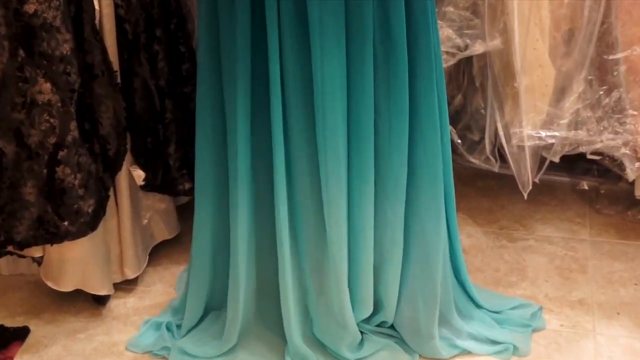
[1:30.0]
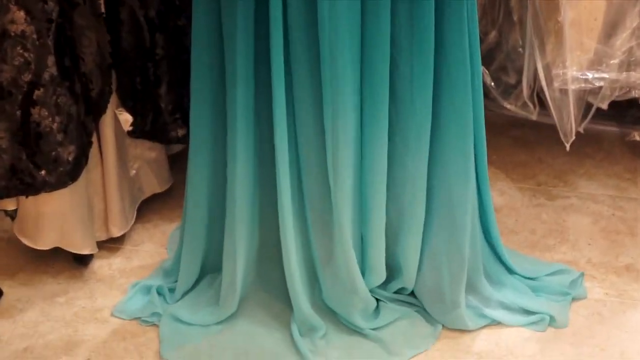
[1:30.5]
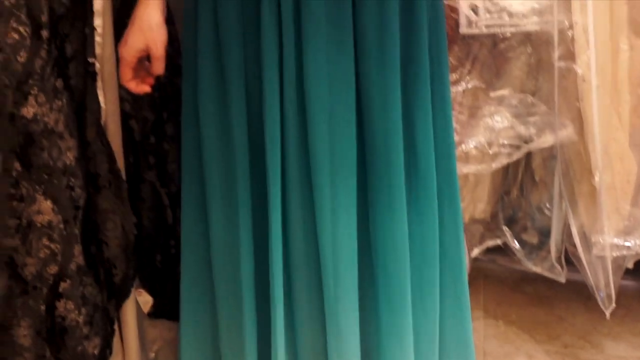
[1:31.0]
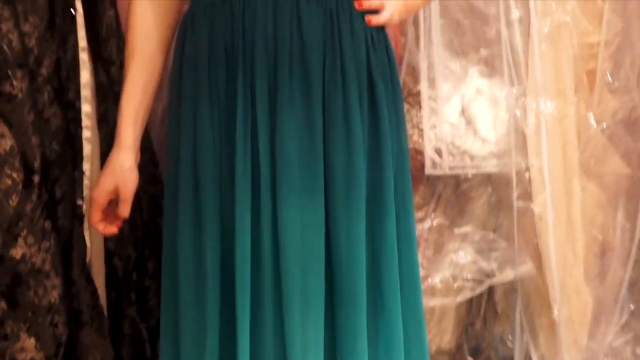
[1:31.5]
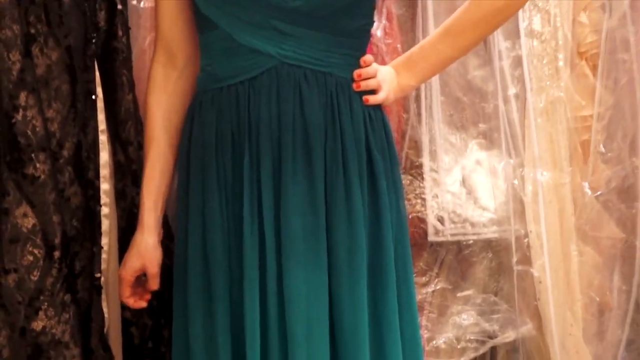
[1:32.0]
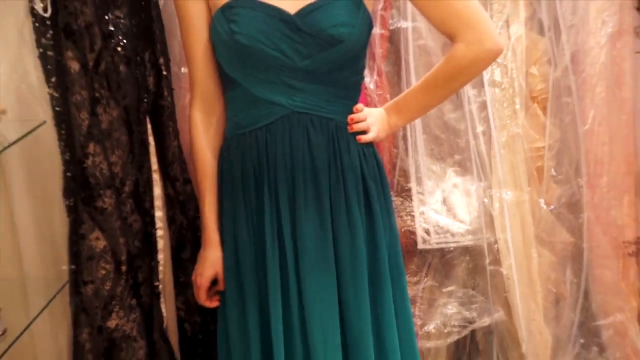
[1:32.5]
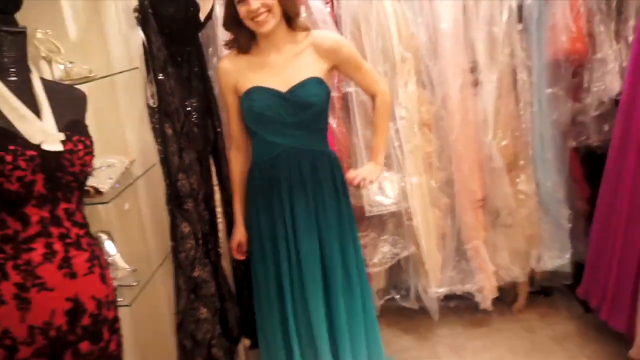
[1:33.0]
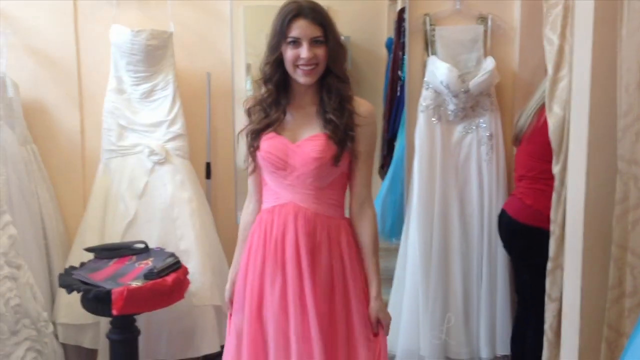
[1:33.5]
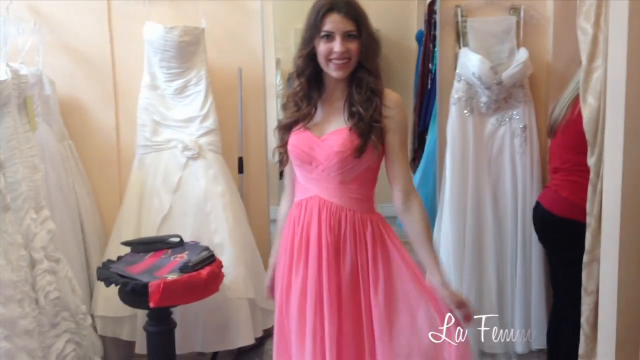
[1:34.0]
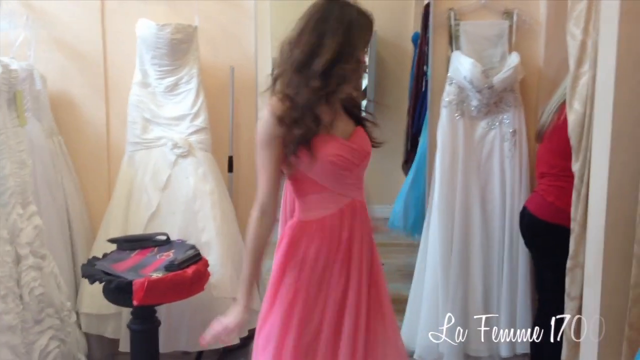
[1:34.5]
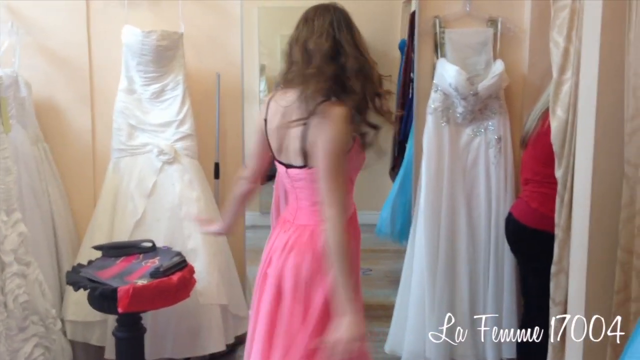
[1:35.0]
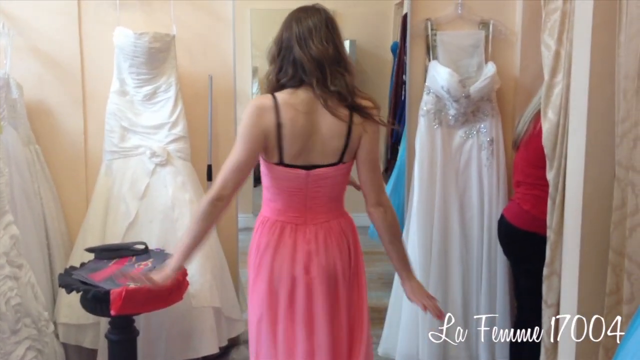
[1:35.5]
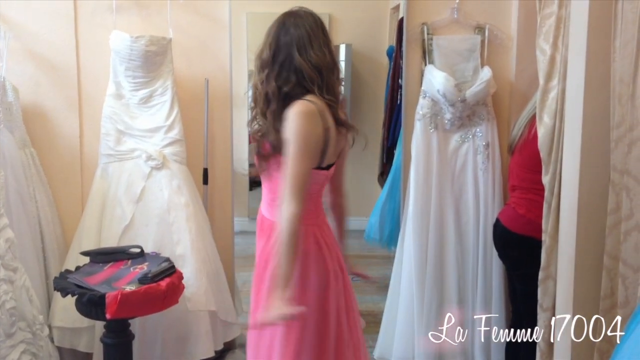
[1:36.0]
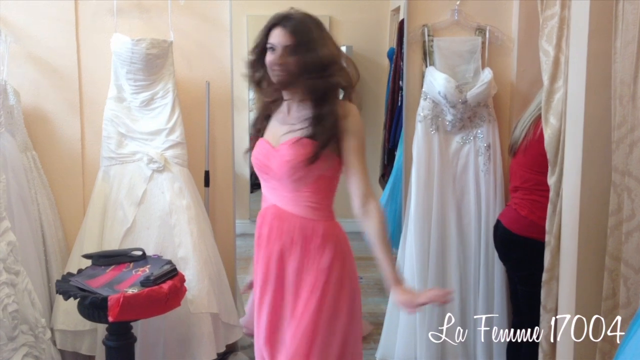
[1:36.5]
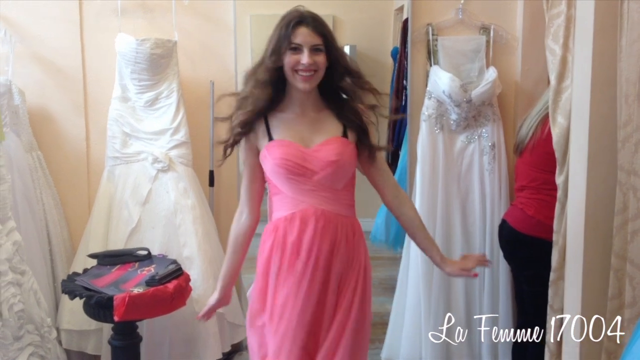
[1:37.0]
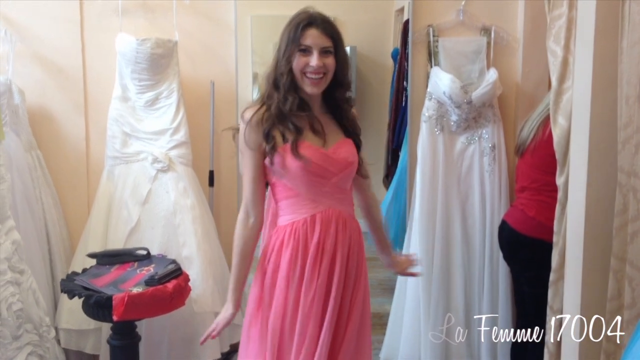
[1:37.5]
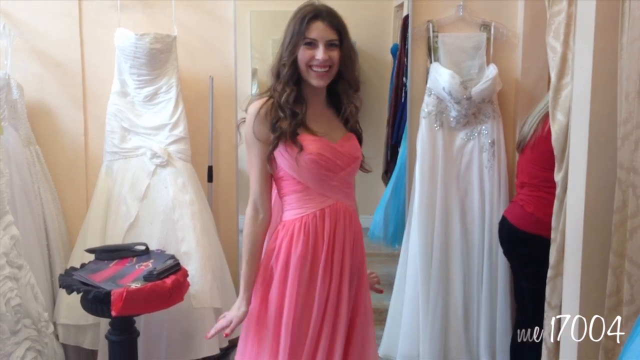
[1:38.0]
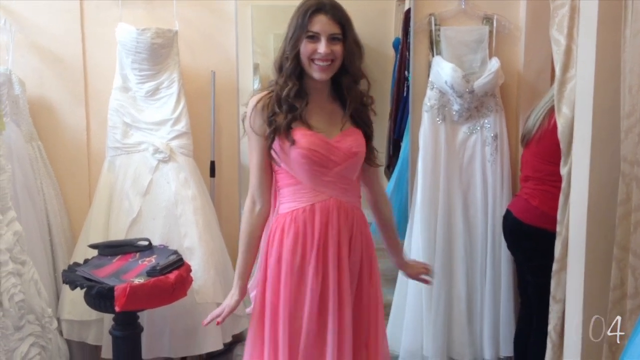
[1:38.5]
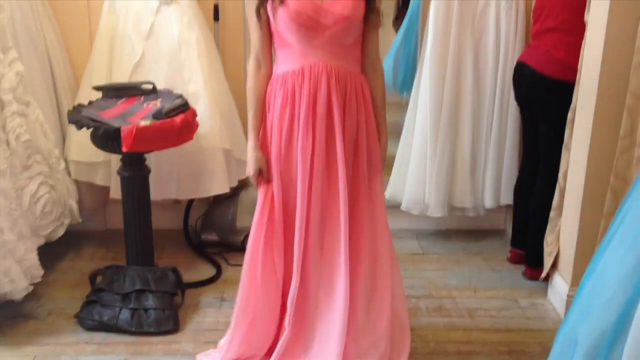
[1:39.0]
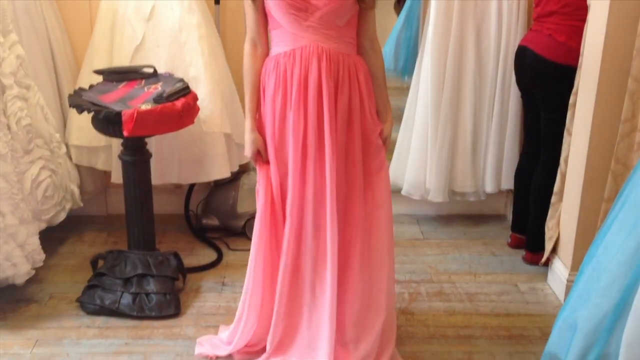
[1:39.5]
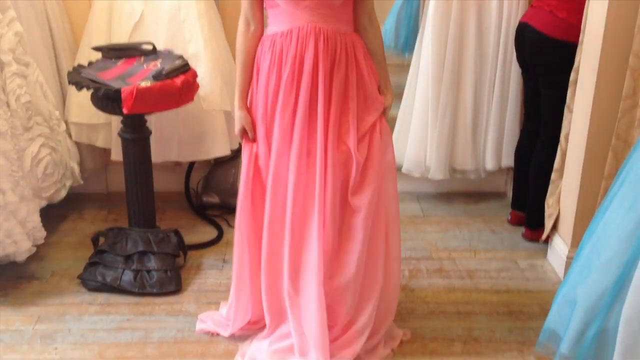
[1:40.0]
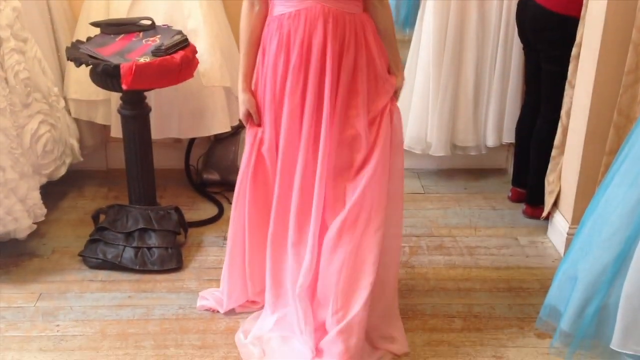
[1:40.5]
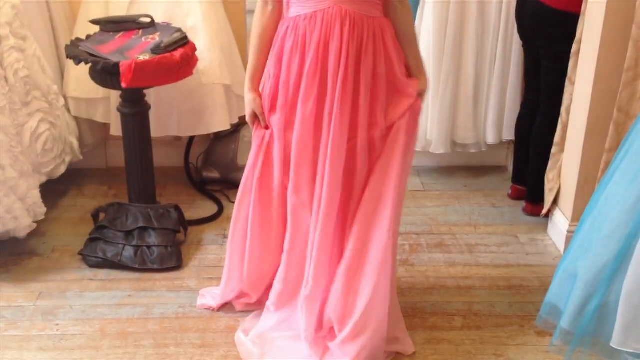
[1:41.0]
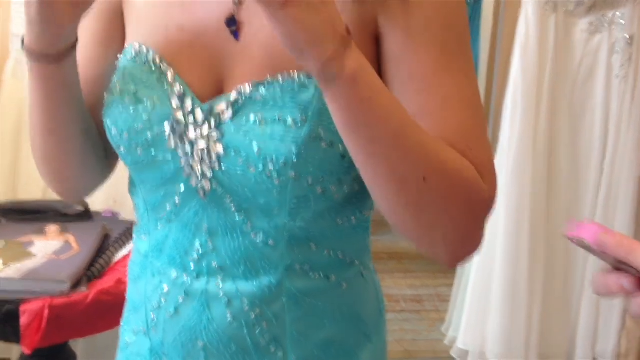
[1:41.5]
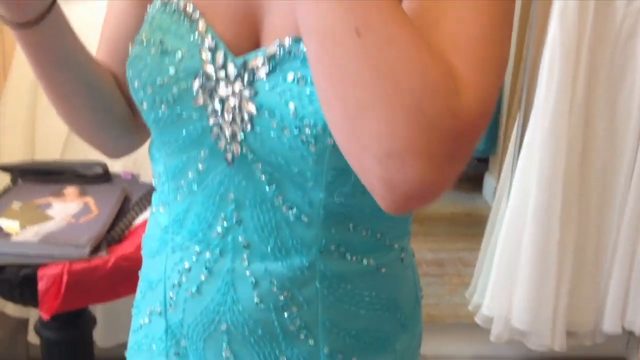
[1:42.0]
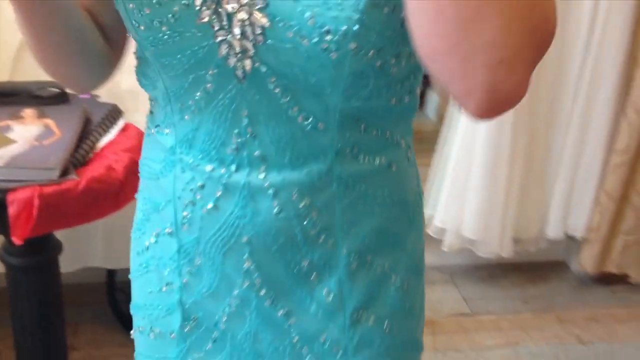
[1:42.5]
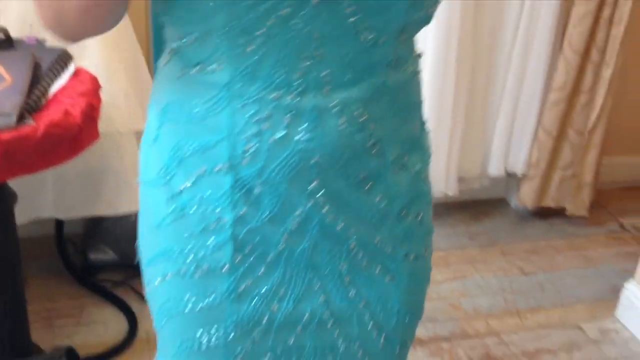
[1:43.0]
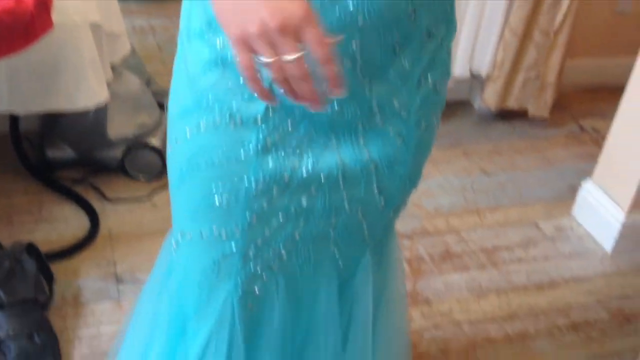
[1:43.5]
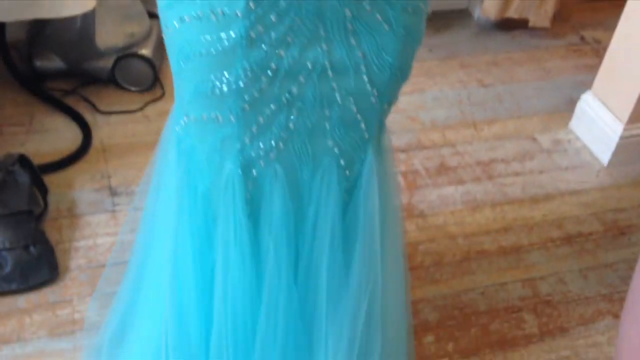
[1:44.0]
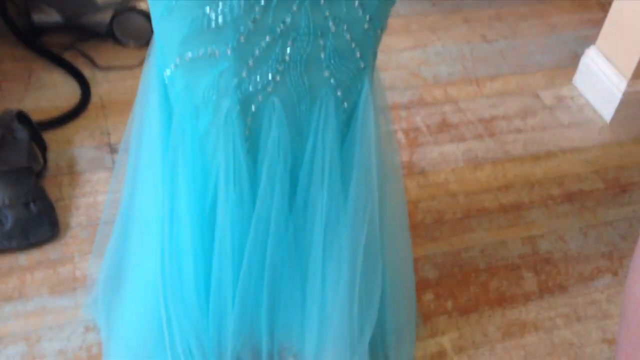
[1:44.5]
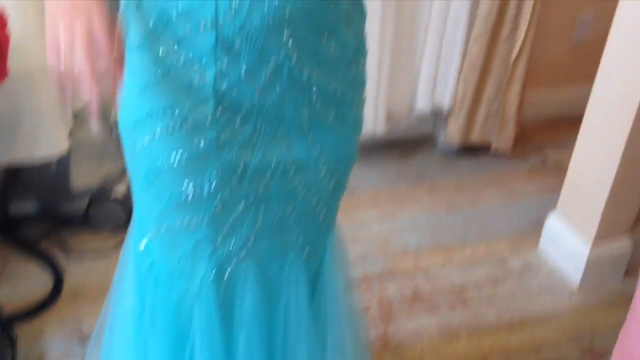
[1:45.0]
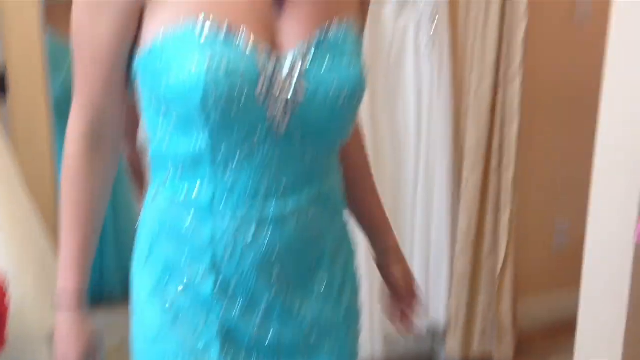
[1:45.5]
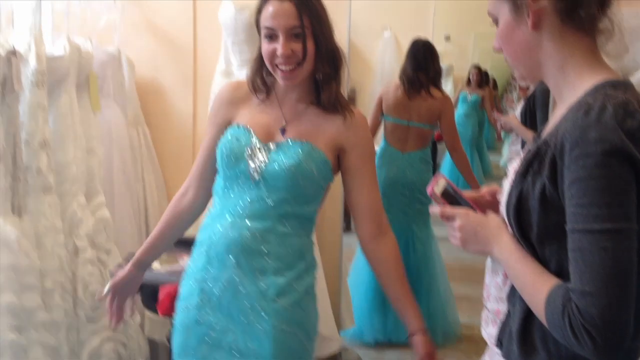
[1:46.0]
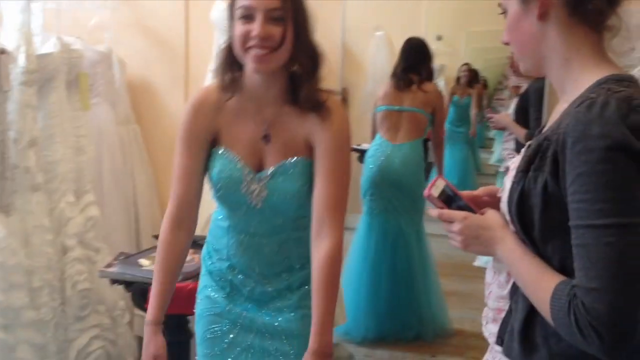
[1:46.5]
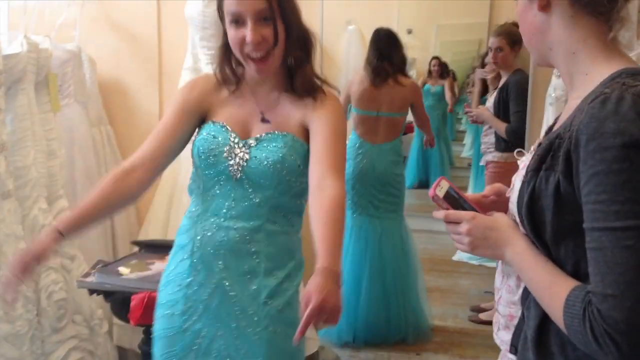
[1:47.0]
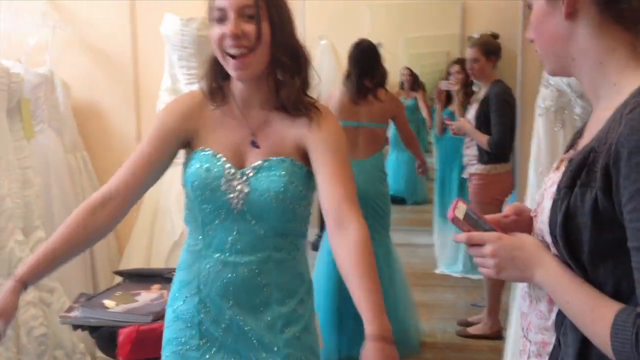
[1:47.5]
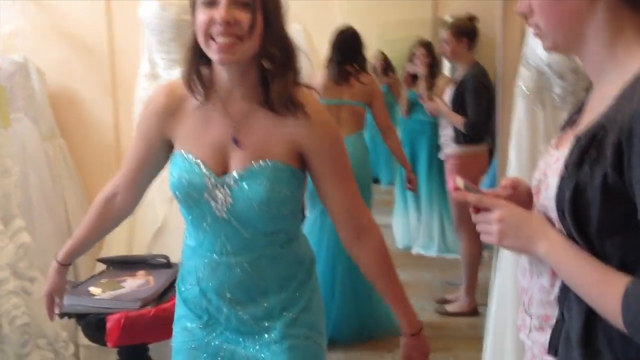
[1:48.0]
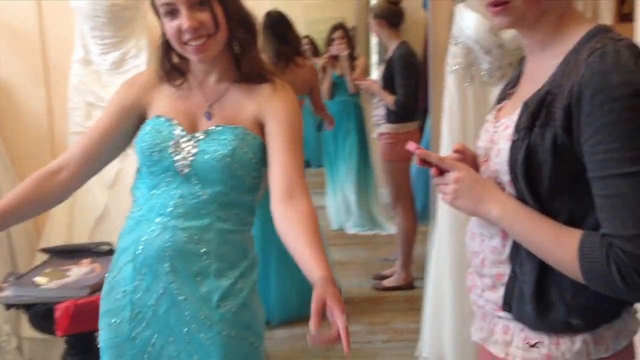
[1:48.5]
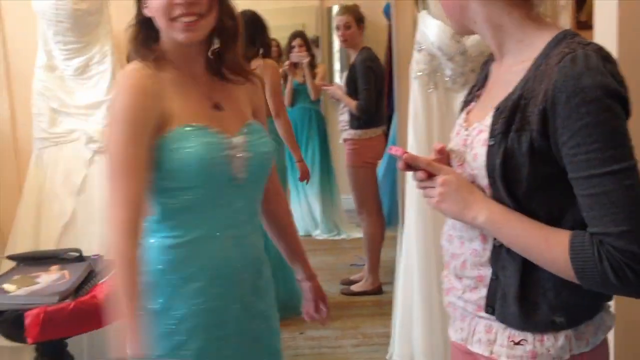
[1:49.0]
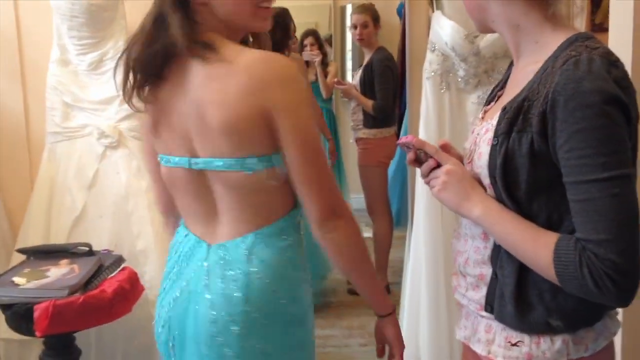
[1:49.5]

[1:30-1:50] The bottom of the bluish dress is shown, with part of a black dress on the left side and dresses in bags with clear plastic covering in the background. The camera pans closer to the bottom of the dress. Next, a girl with brownish hair smiles at the camera wearing a pink dress whose lower part has a somewhat frilly look. There are white dresses and something blue behind her, and the walls are tan. Something red and black is on a pedestal, possibly a bag. The girl spins around, showing black straps, maybe from a bra. As the camera pans down, a black bag is on the ground, and on the right side there is a lady in a red top and black pants with what look like reddish shoes. The dressing room floor has a brown or tan wood look. The camera then moves up and down on the lady in the blue dress.